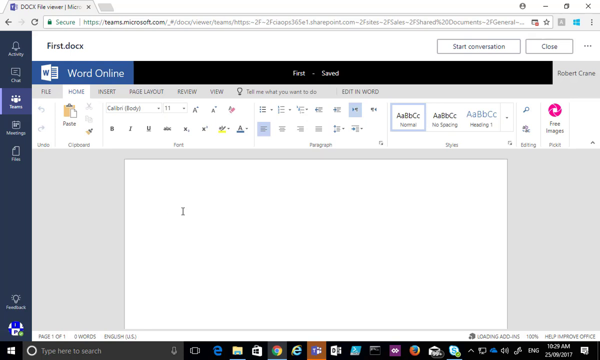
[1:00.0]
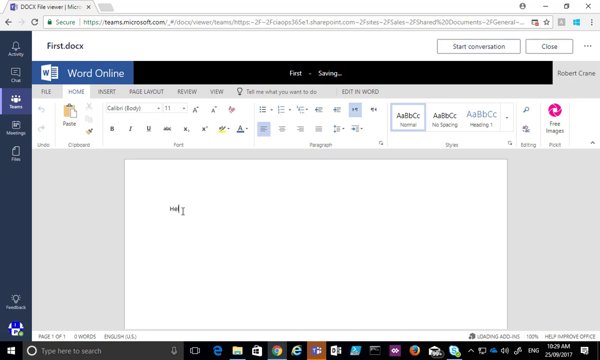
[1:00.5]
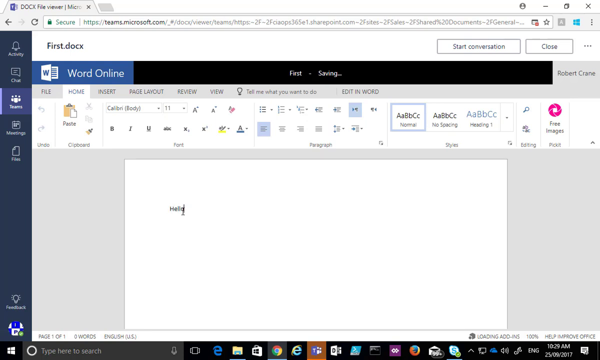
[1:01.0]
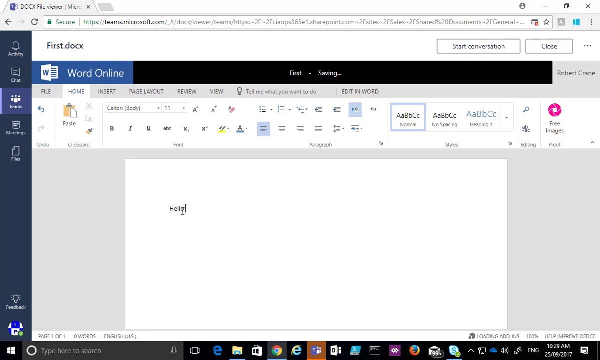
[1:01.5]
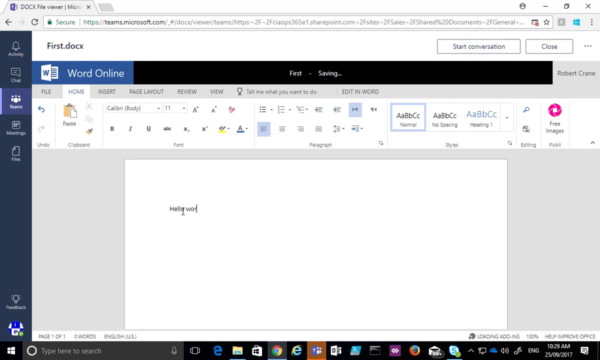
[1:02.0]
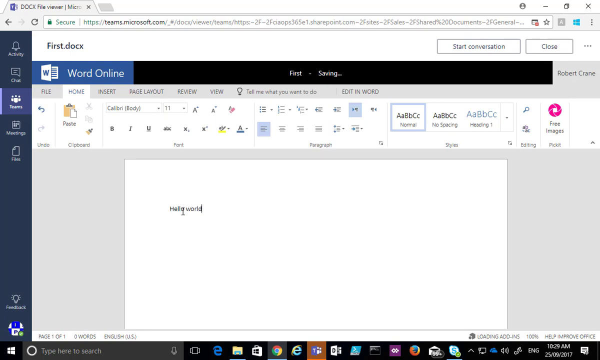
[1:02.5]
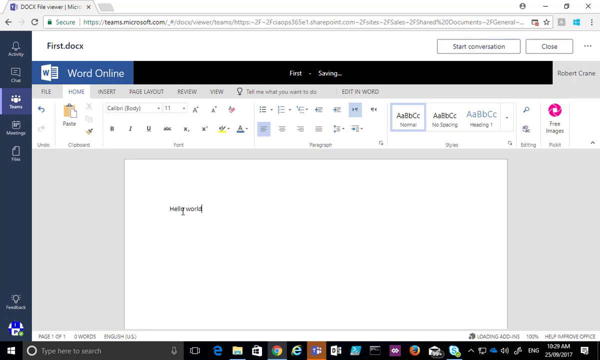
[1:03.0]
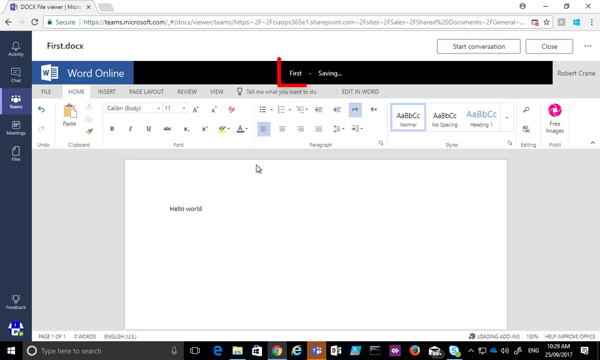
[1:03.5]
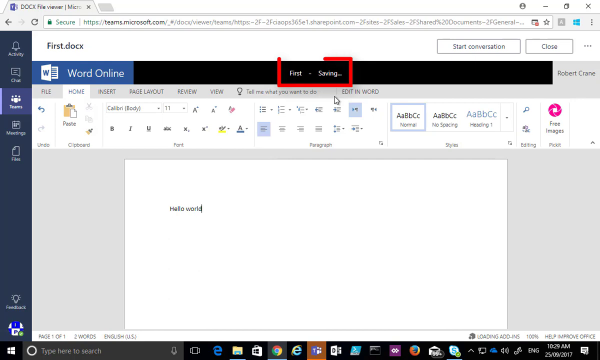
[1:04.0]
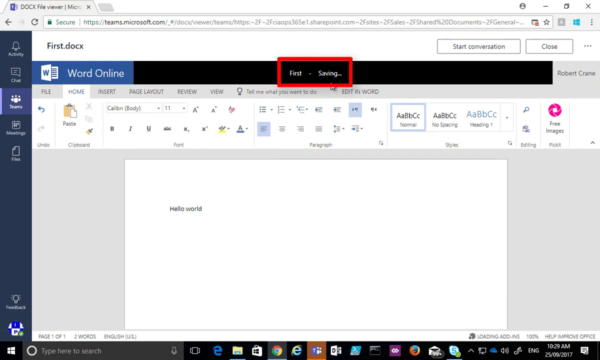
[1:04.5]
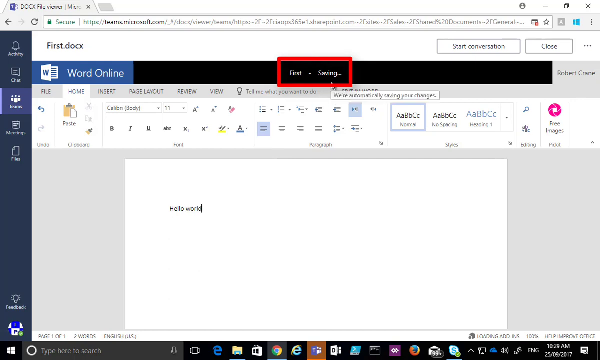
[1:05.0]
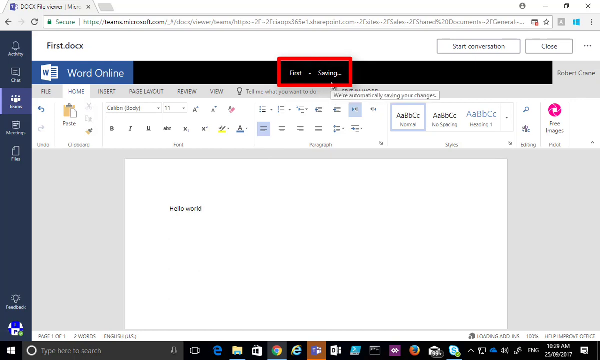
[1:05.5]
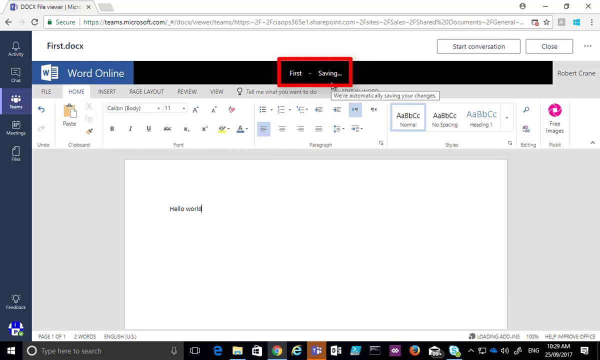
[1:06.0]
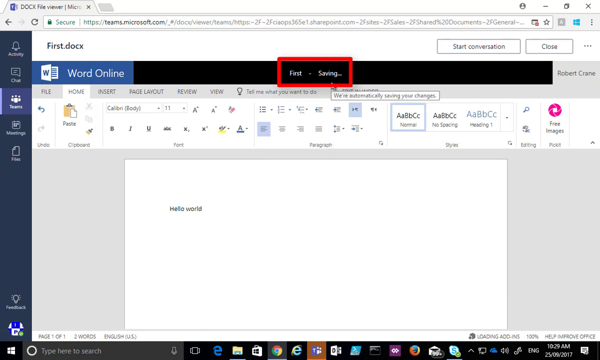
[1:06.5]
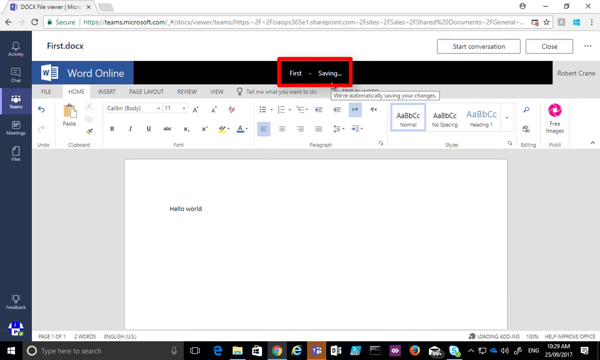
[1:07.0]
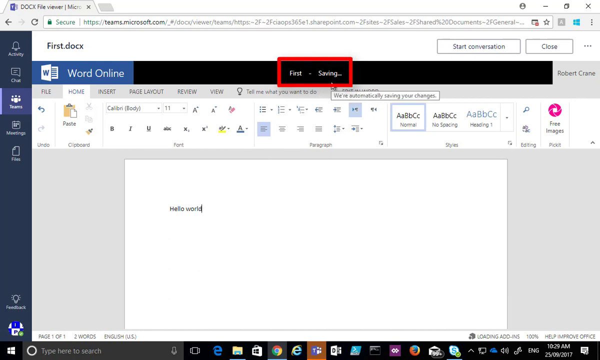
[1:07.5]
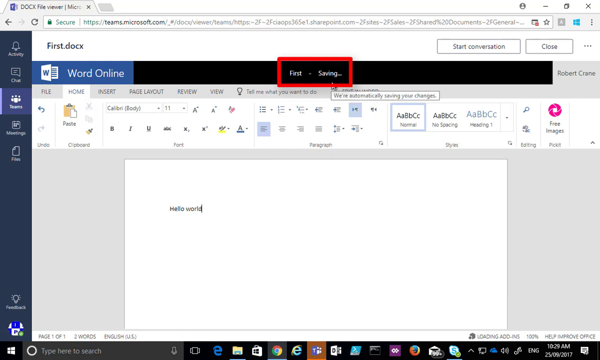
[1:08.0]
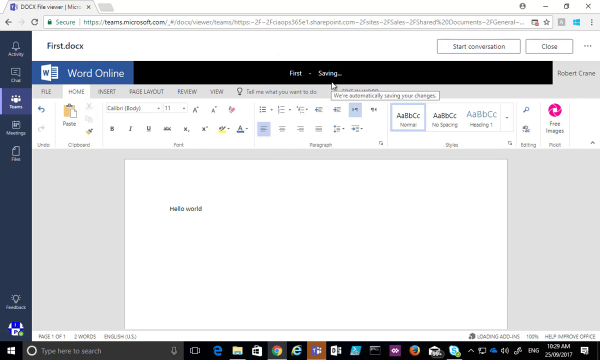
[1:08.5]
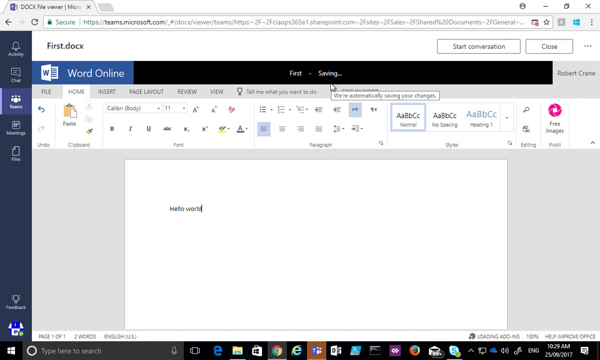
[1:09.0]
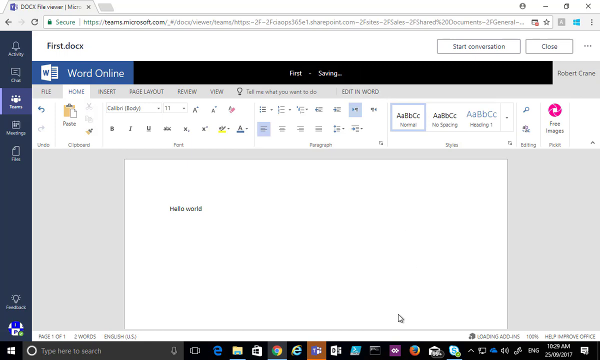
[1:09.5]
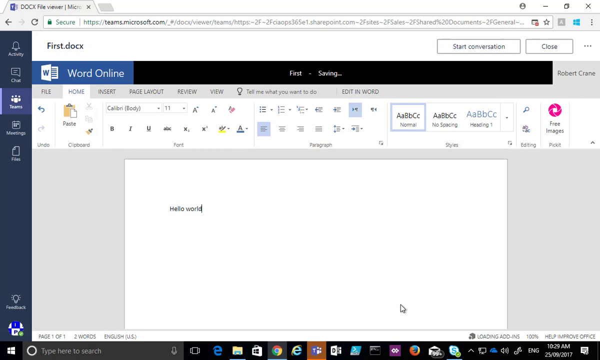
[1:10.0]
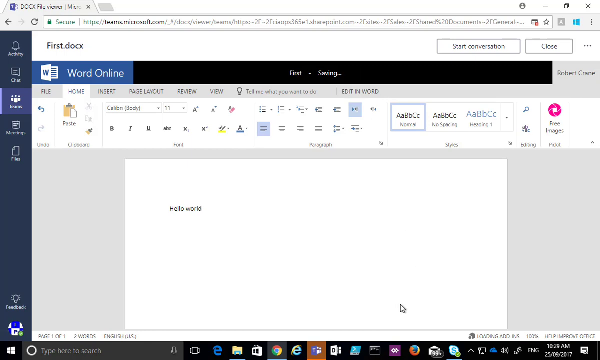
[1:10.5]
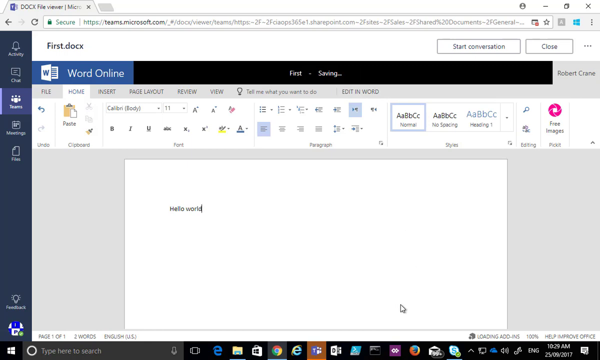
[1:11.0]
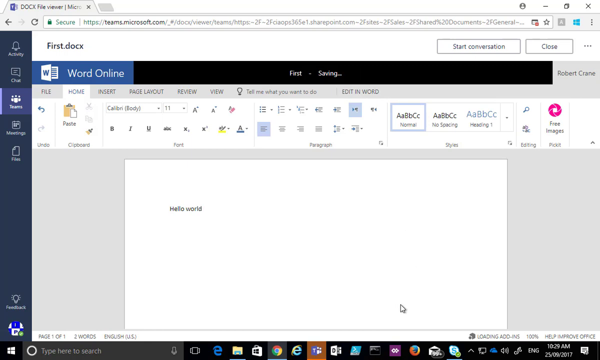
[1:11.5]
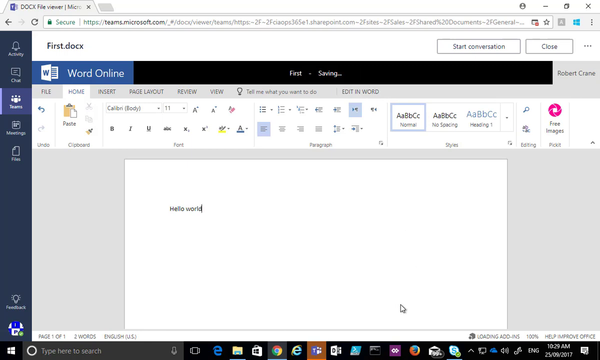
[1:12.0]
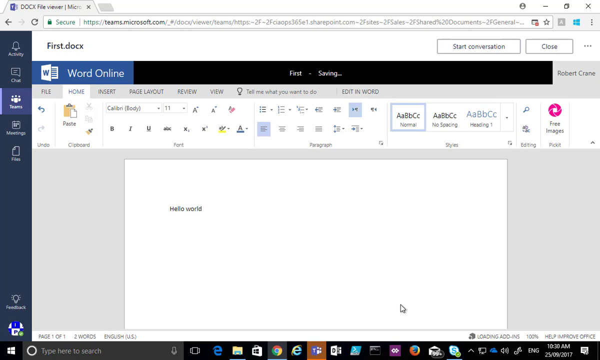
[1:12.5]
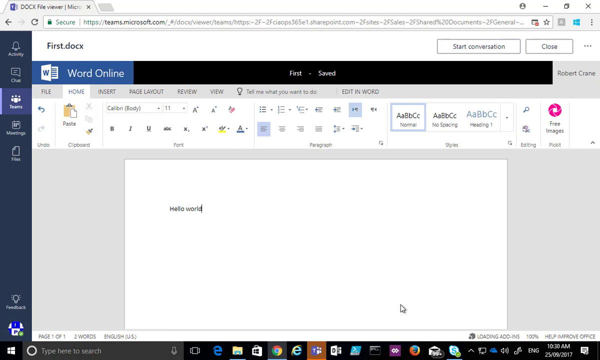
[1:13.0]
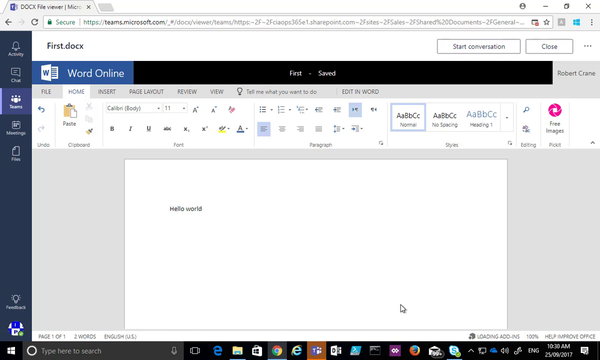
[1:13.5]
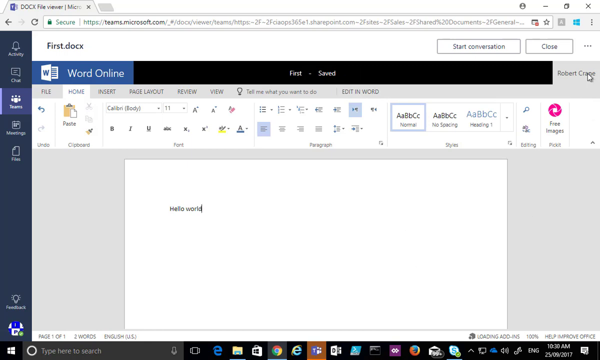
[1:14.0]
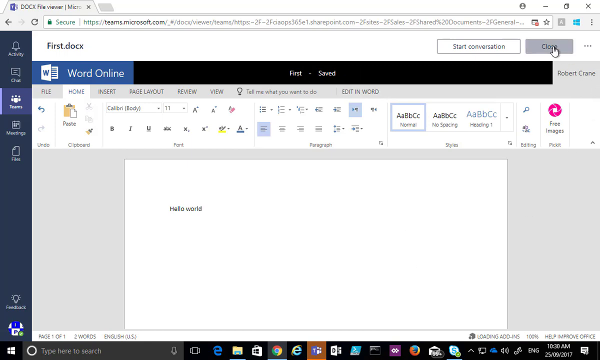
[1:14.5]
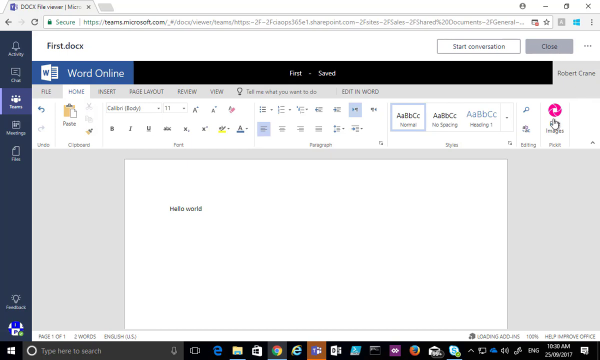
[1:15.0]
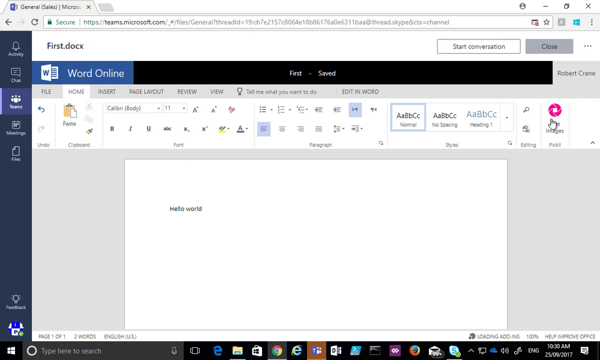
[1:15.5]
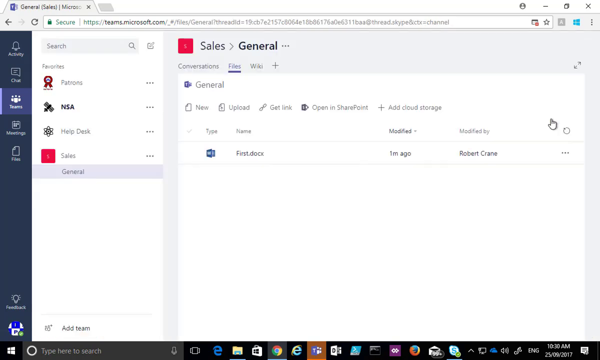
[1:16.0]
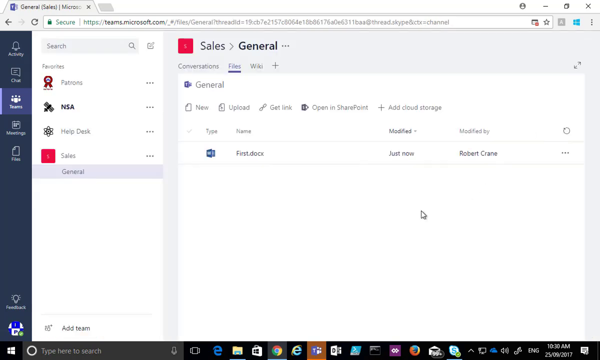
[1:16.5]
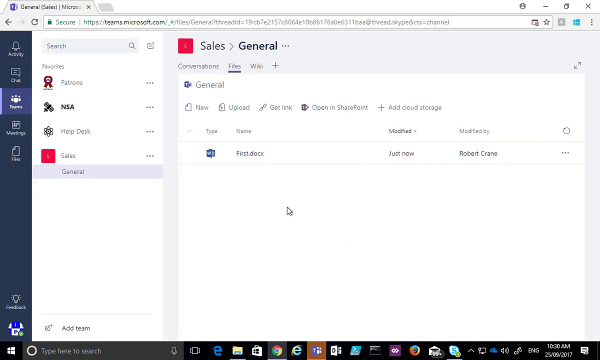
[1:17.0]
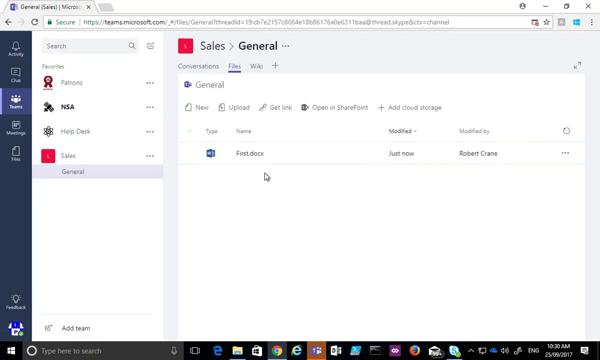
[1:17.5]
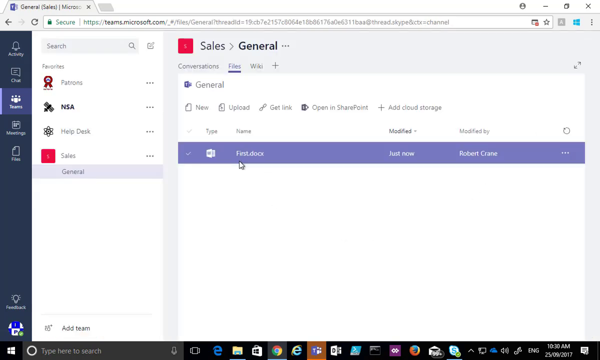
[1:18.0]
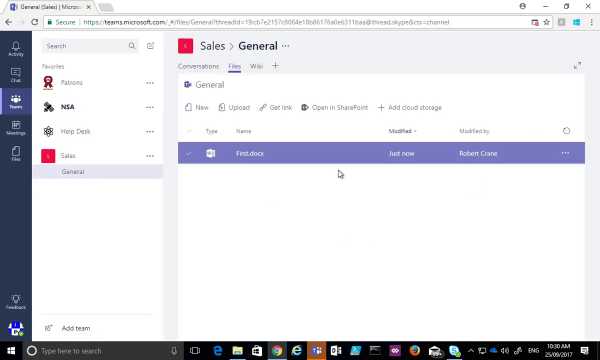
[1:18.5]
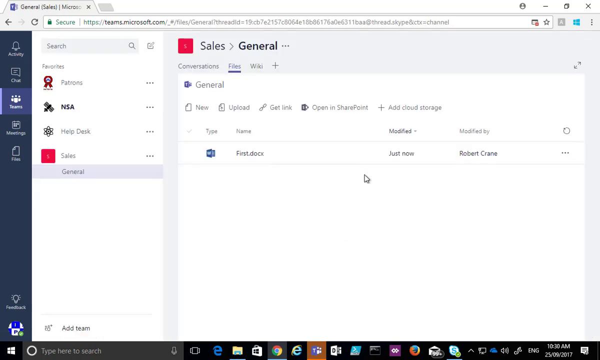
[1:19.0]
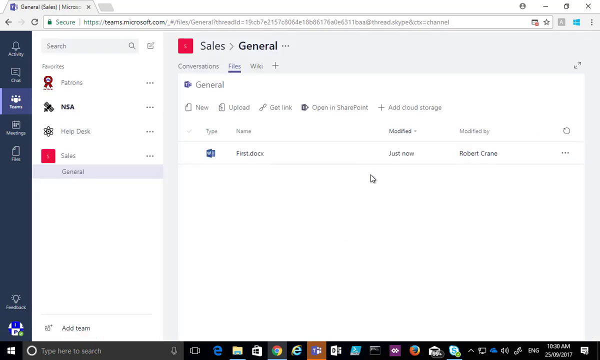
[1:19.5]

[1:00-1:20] The document is open in the Teams setting. "Hello world" is typed into the Word document, and a small message appears. At the top of the screen is a black box with the name of the document, and as soon as typing starts, a message appears reading "Saving." The cursor circles the document's name and its status. The document is then closed.